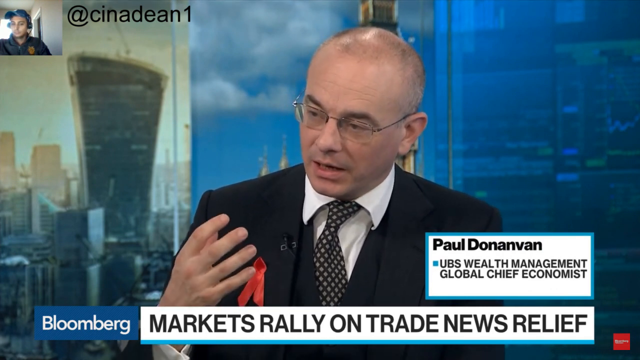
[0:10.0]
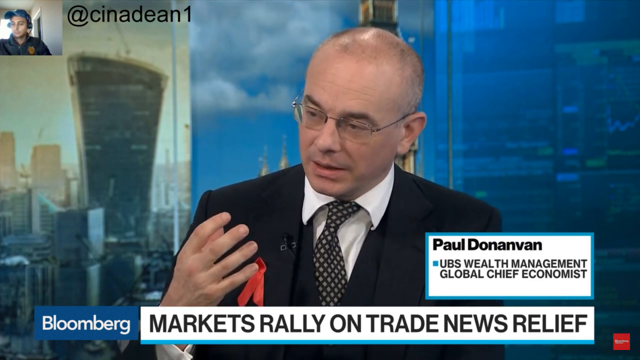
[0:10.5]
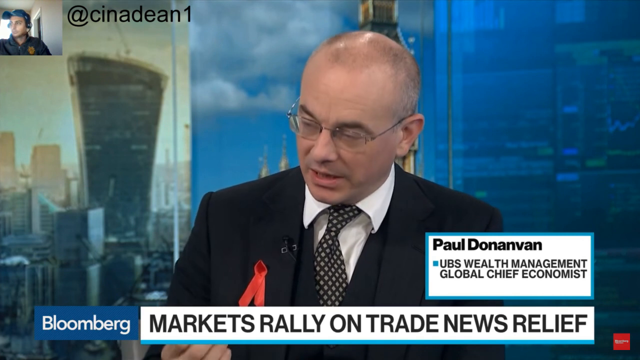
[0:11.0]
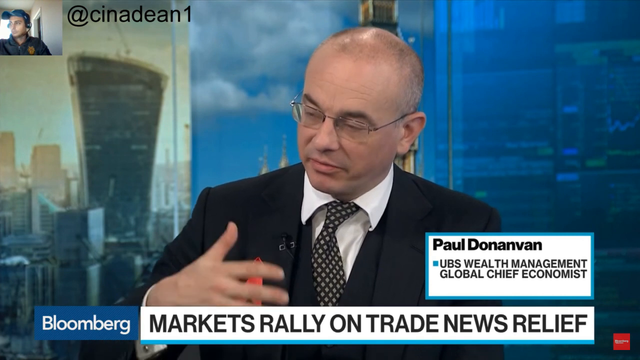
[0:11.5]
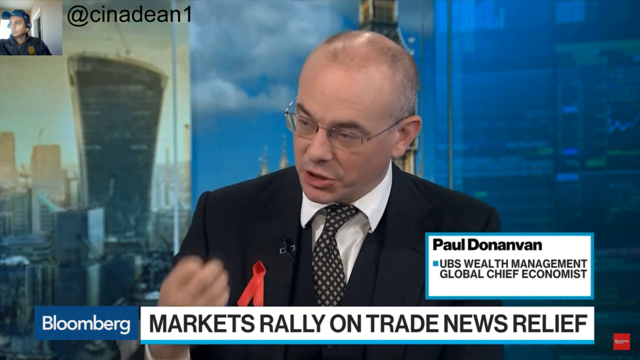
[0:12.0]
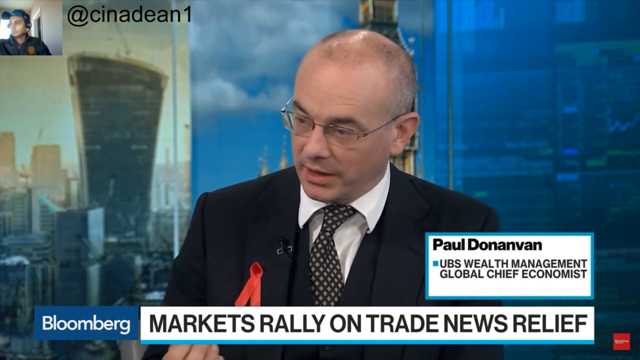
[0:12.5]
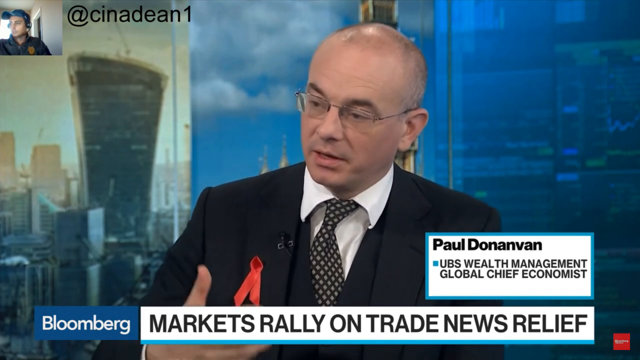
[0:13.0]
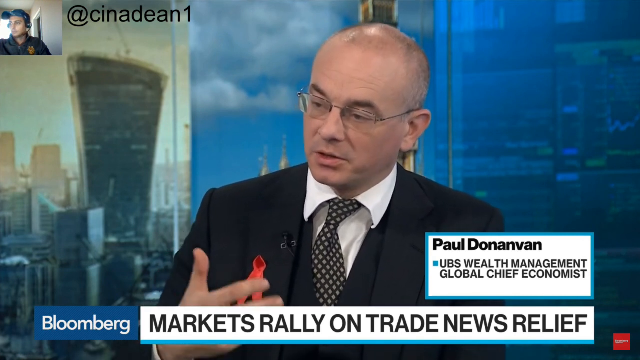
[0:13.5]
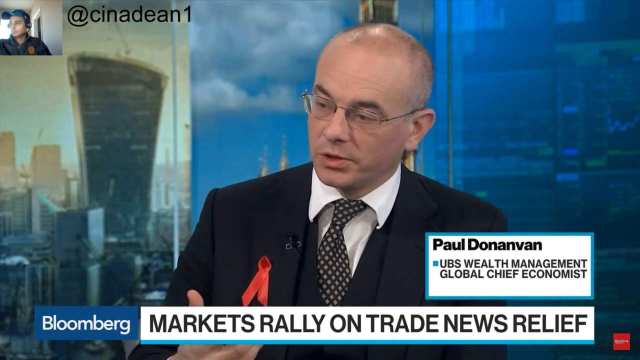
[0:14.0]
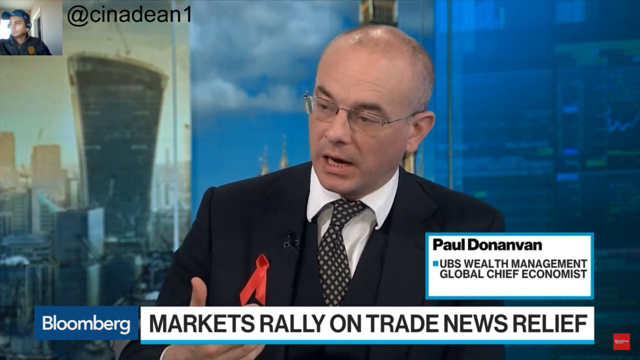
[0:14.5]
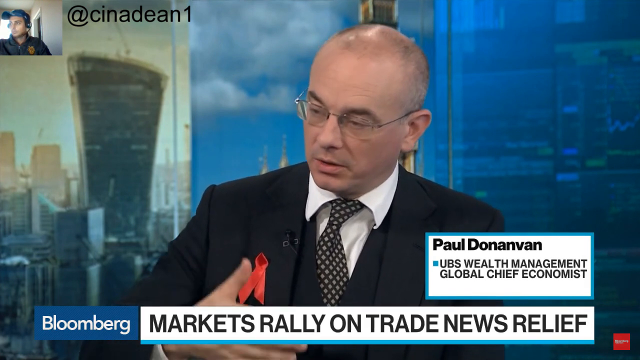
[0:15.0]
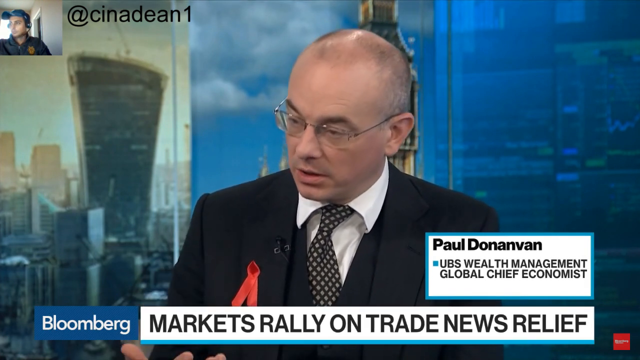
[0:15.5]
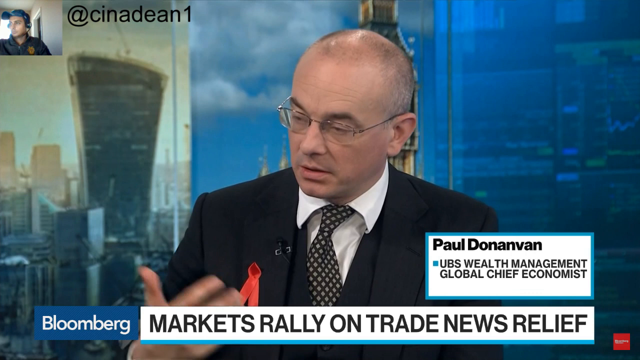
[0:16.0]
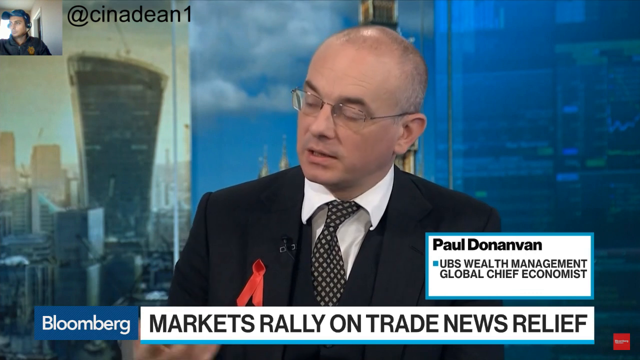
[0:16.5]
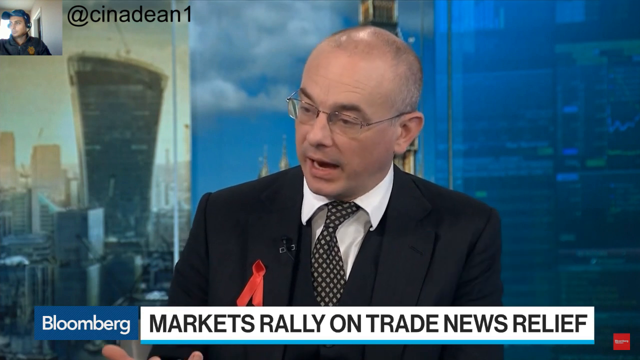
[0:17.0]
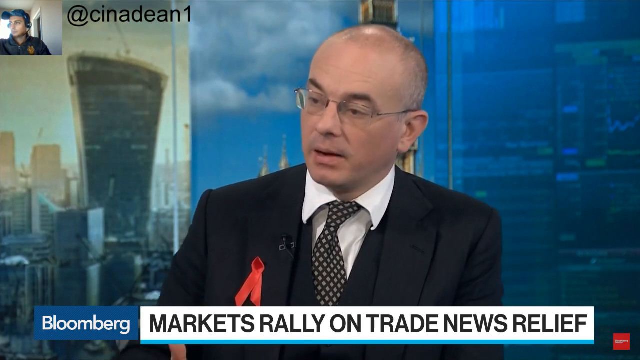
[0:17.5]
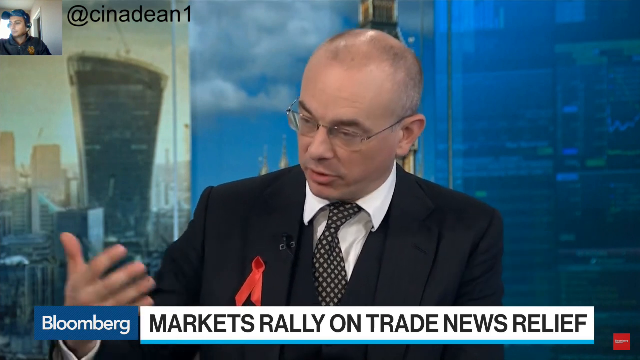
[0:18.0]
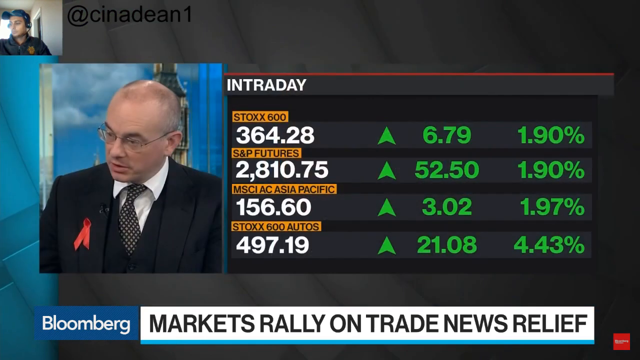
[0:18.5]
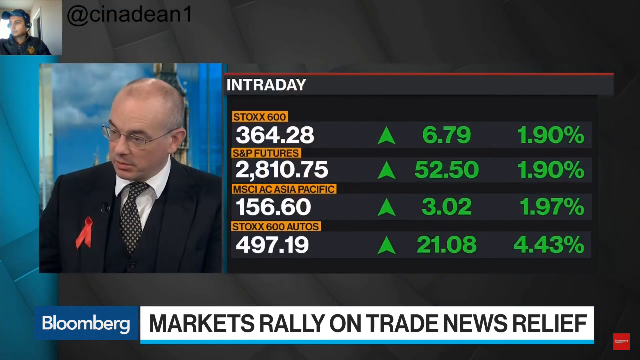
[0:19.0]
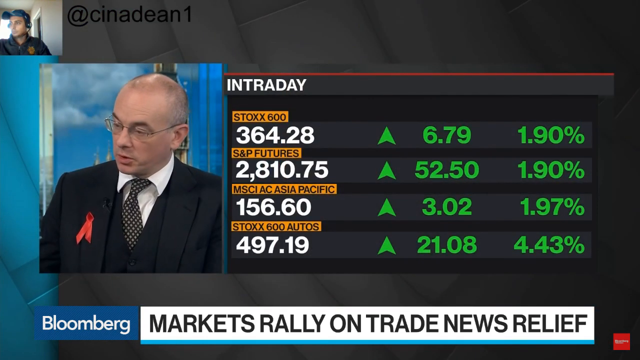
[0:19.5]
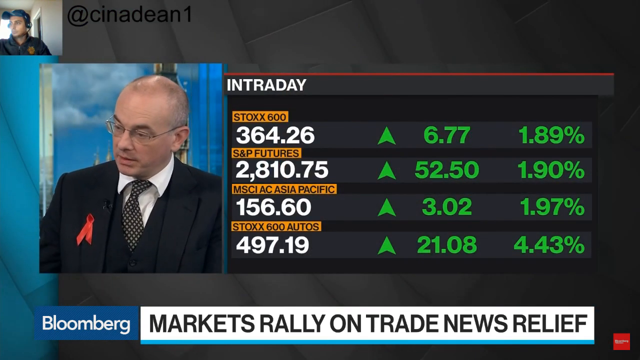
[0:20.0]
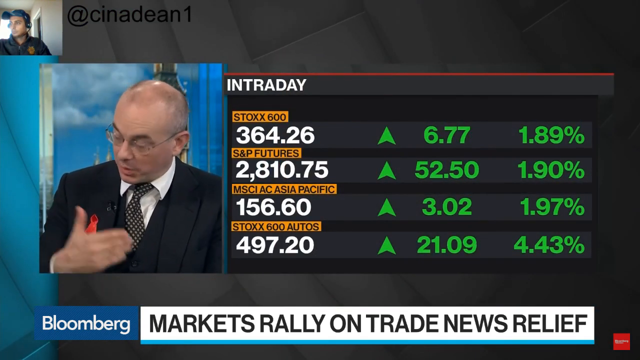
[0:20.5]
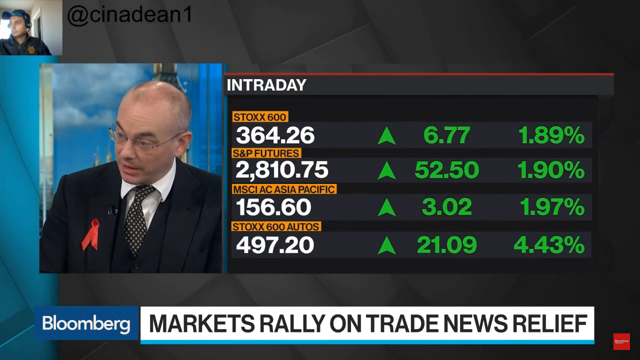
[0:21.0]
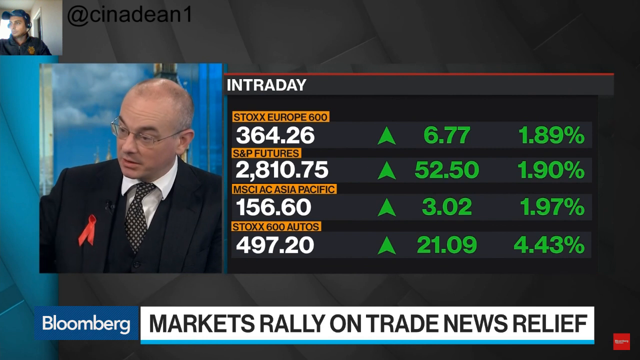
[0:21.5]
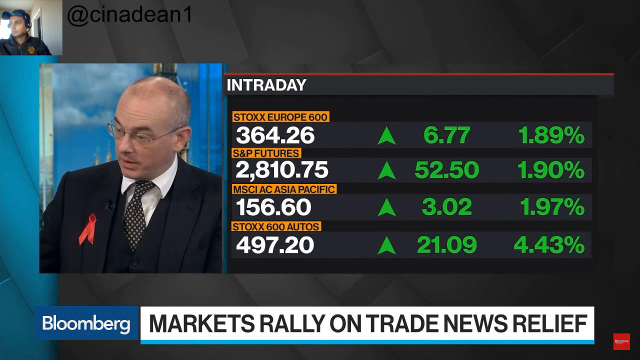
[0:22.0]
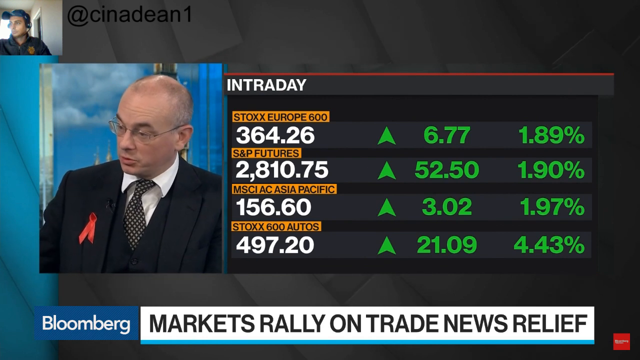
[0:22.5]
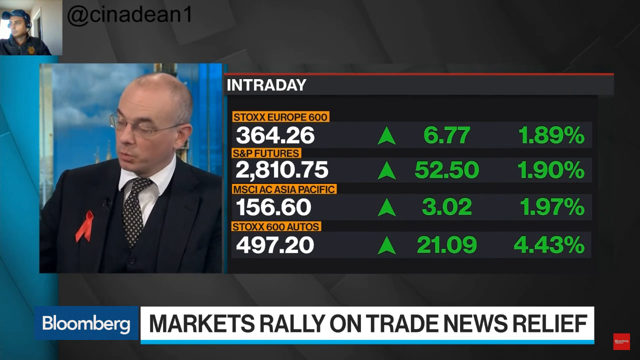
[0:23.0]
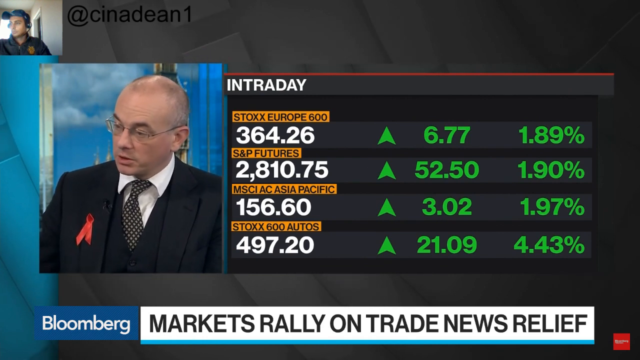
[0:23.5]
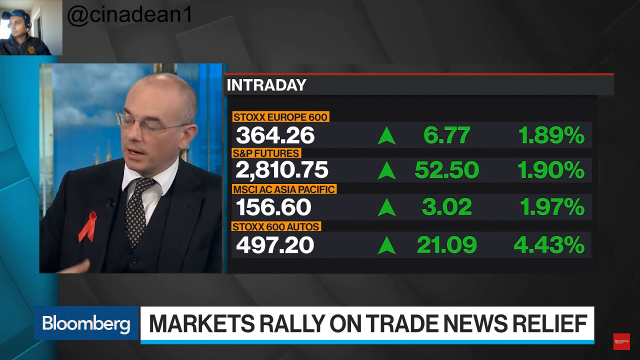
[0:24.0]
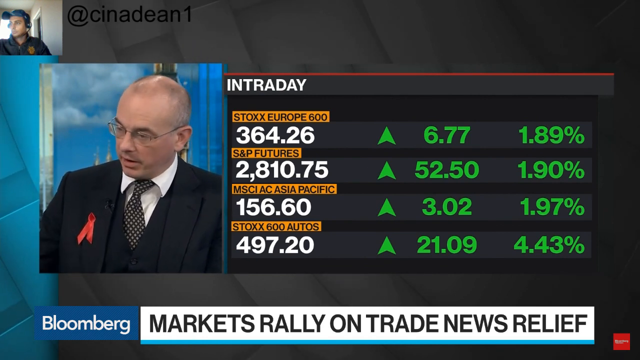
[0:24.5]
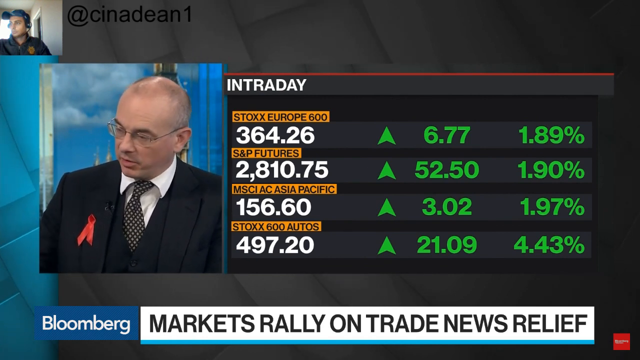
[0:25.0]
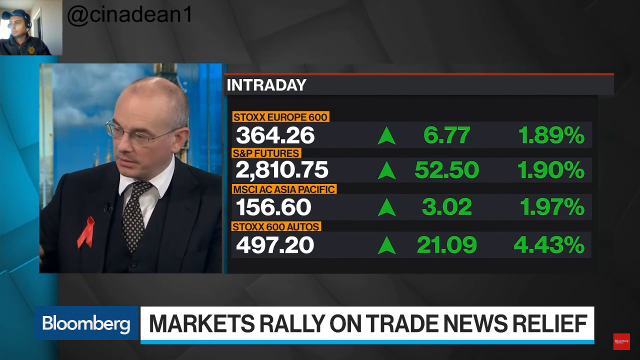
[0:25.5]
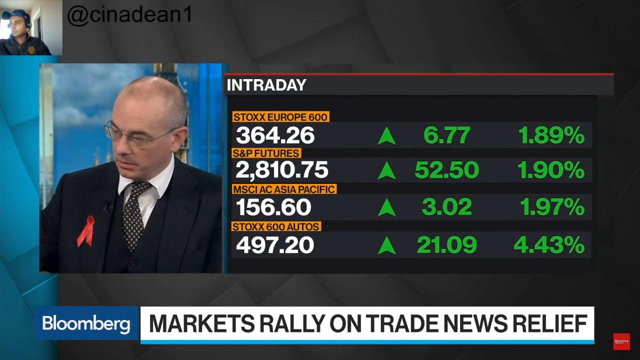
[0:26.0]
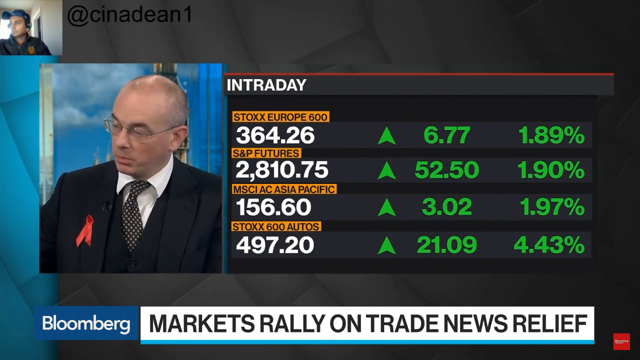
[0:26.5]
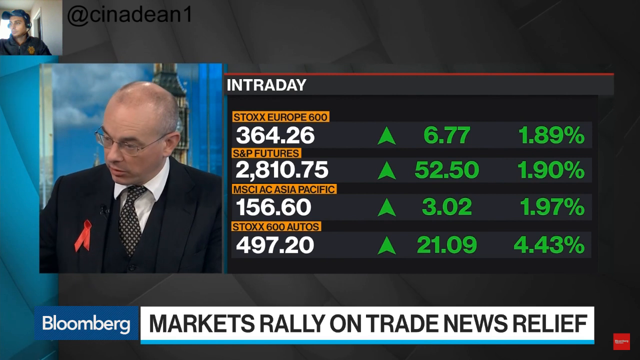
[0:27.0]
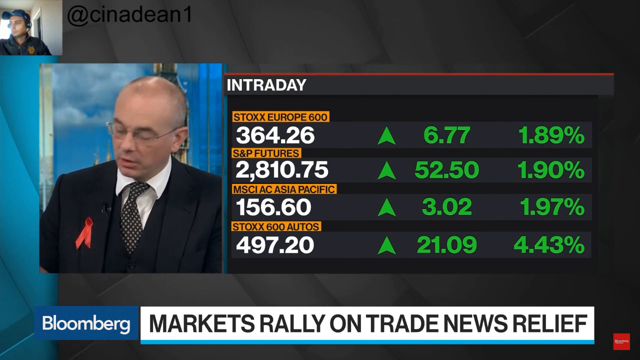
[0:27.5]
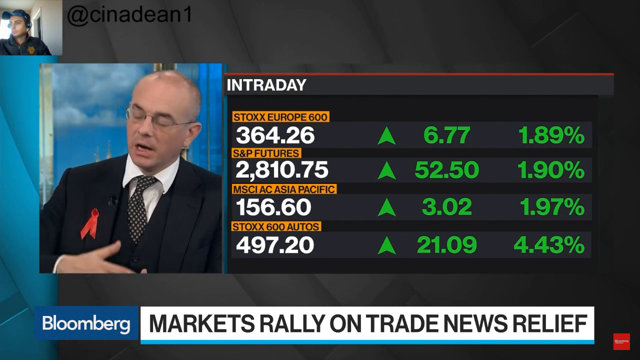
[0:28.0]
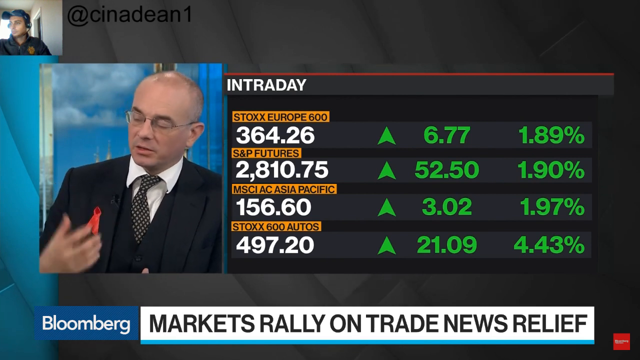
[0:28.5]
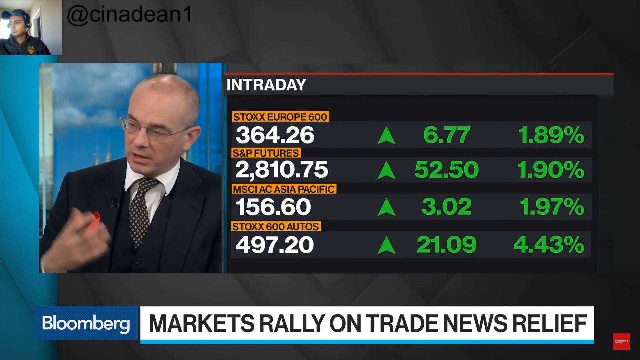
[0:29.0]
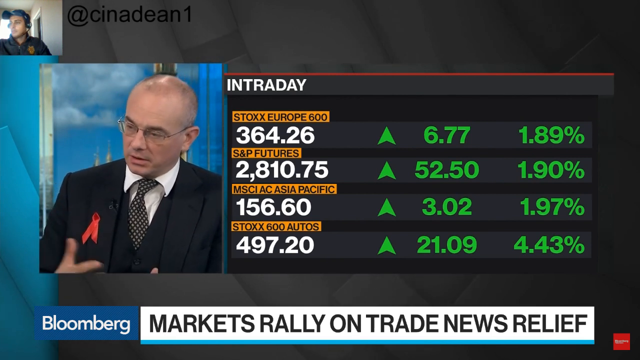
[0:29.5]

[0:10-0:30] A close-up shows Paul Donovan, UBS Wealth Management Global Chief Economist. He wears a white button-down shirt with a tie, a black suit with a vest, and a red ribbon on the right lapel of his suit coat. His right hand is kind of up at shoulder level as he talks. Across the bottom of the screen, a white box with black letters carries text about the markets rallying on trade news and relief, and to its left is a blue and purple logo on a blue box. In the top left corner is a picture of a man wearing a black jacket and a baseball cap, and to the right of it, in black letters, is the social media handle "CINADEN1". Donovan continues talking, then an intraday graphic of stock indexes appears, all increasing, by amounts from six points to 52 points and percentages of almost 2% and 4.4%.